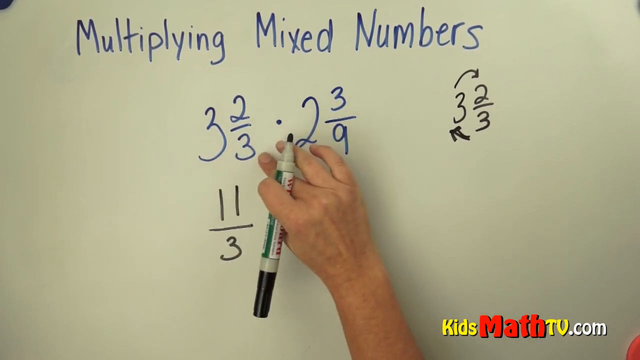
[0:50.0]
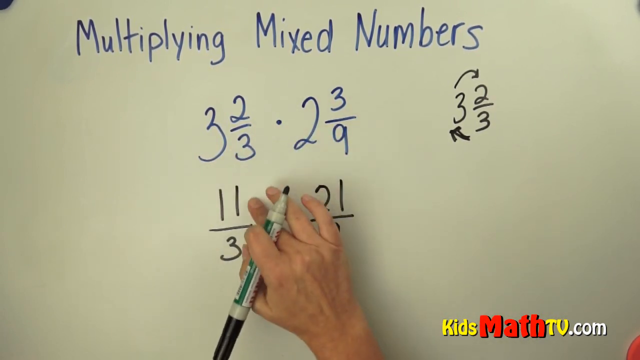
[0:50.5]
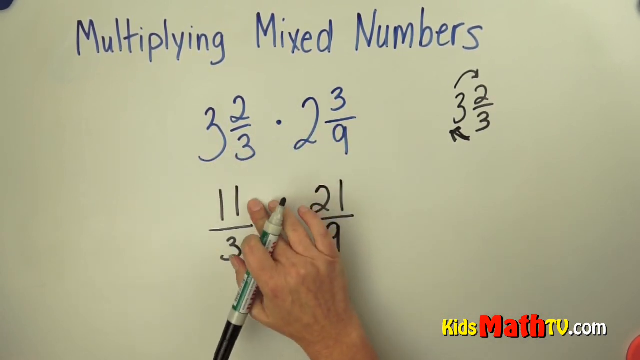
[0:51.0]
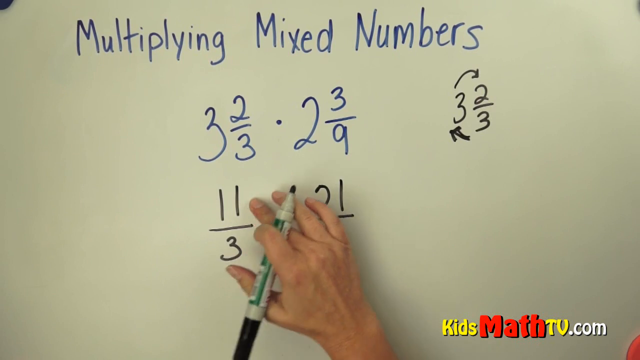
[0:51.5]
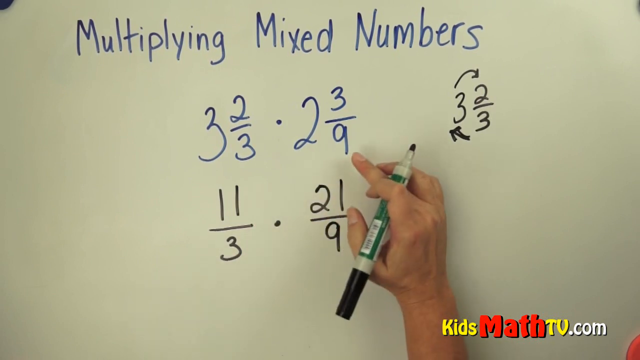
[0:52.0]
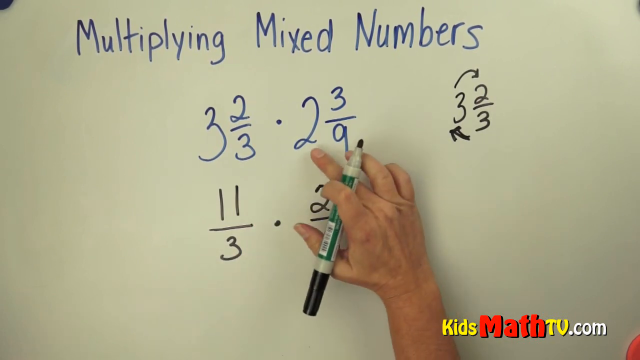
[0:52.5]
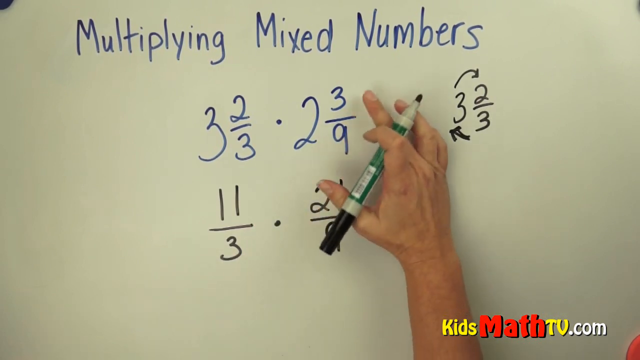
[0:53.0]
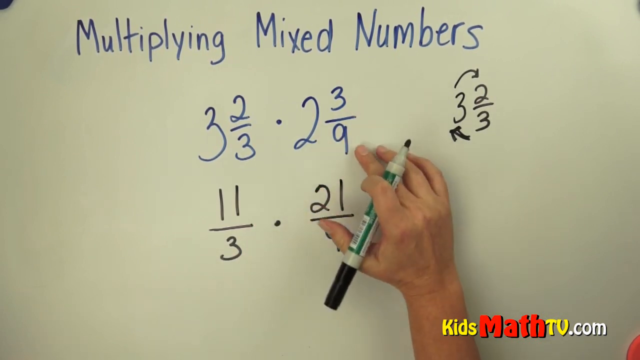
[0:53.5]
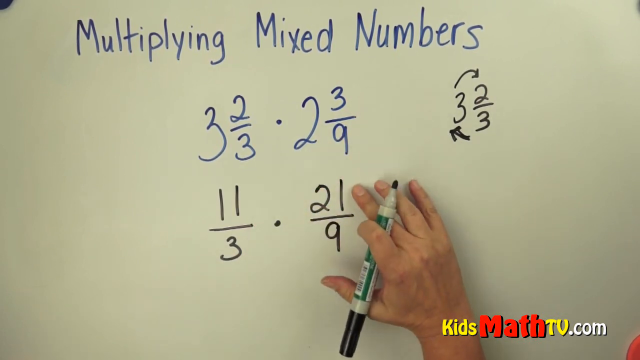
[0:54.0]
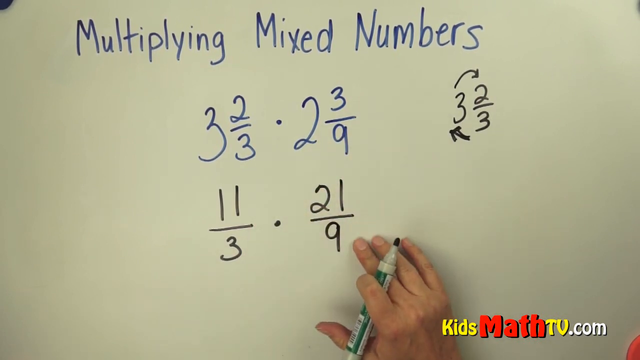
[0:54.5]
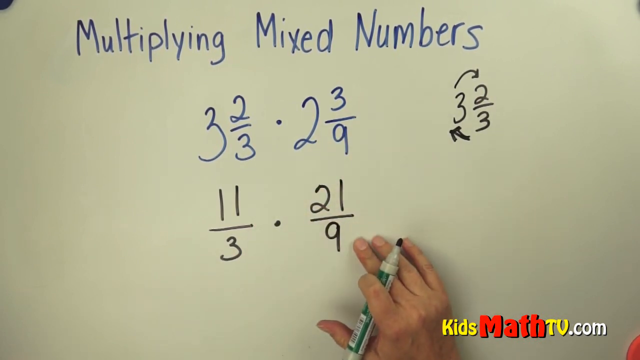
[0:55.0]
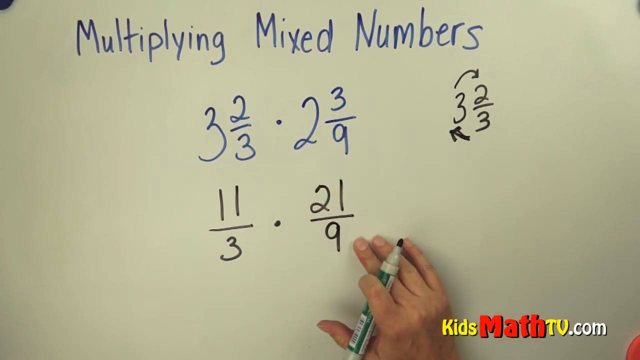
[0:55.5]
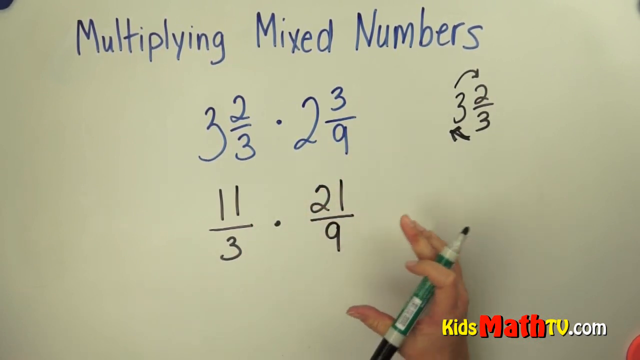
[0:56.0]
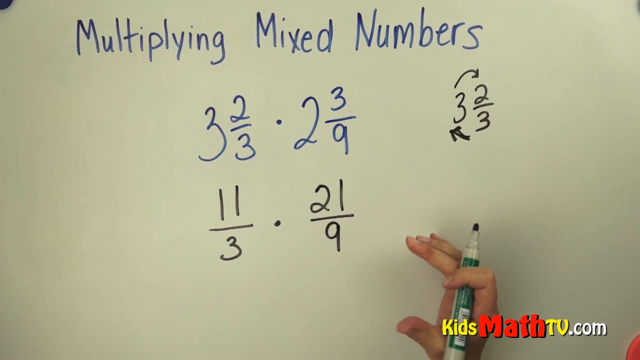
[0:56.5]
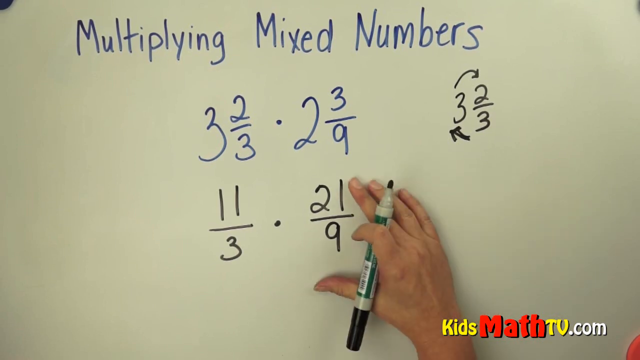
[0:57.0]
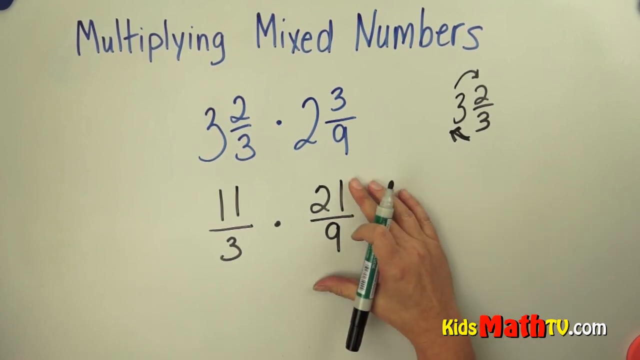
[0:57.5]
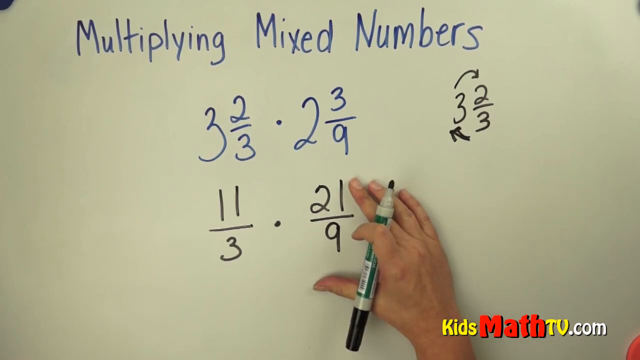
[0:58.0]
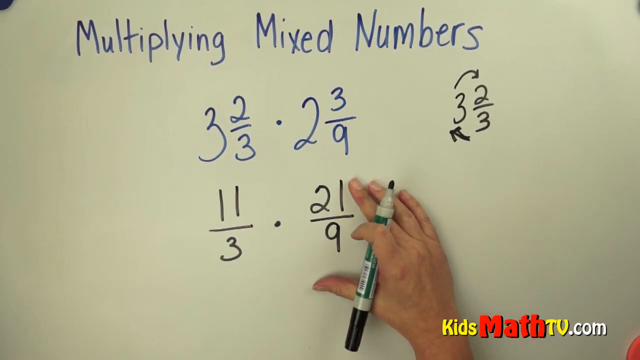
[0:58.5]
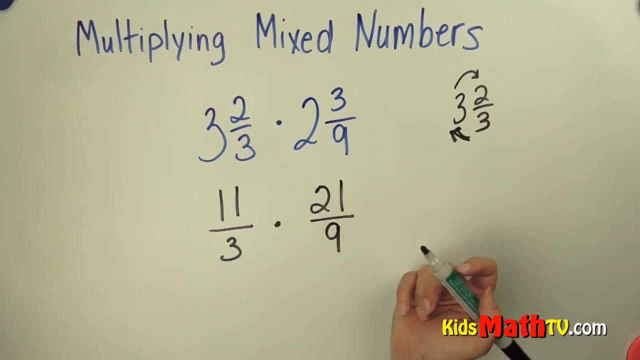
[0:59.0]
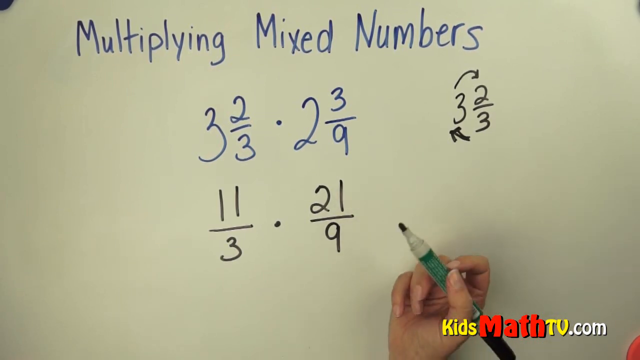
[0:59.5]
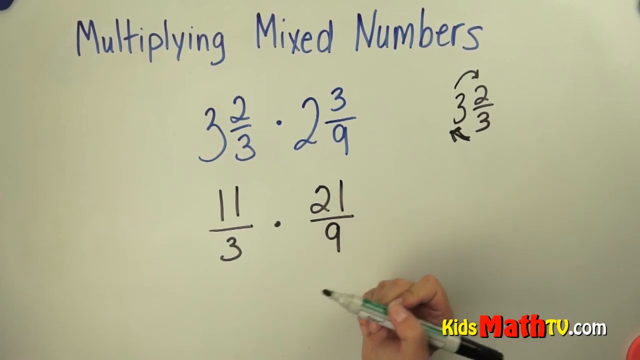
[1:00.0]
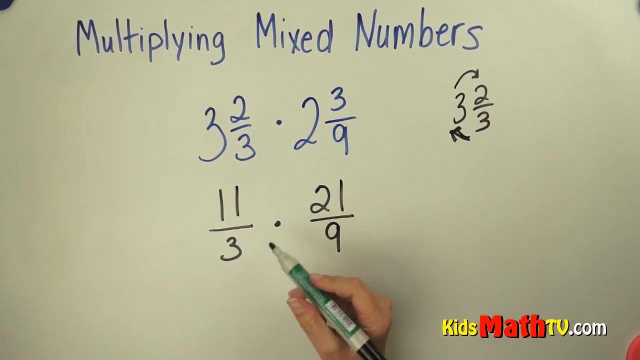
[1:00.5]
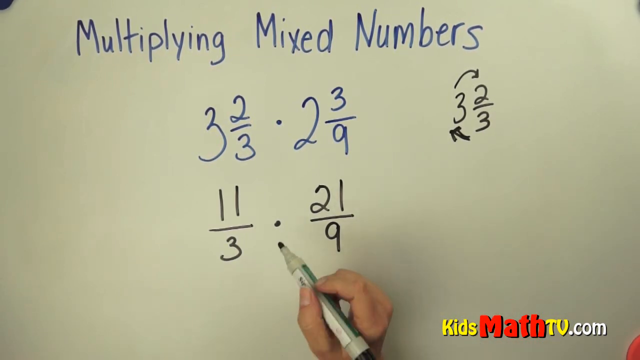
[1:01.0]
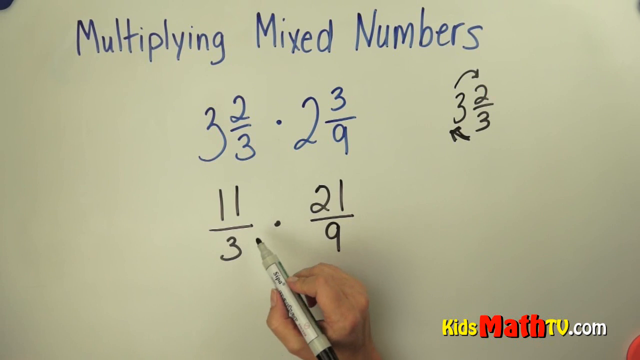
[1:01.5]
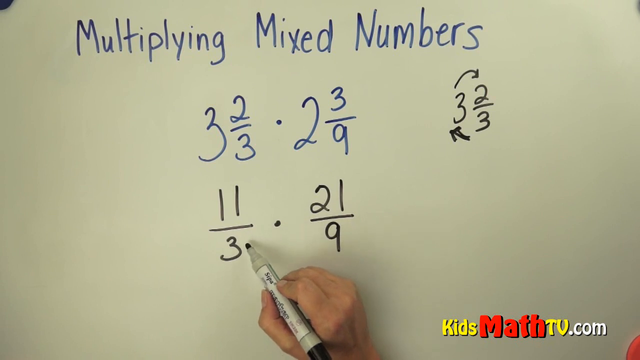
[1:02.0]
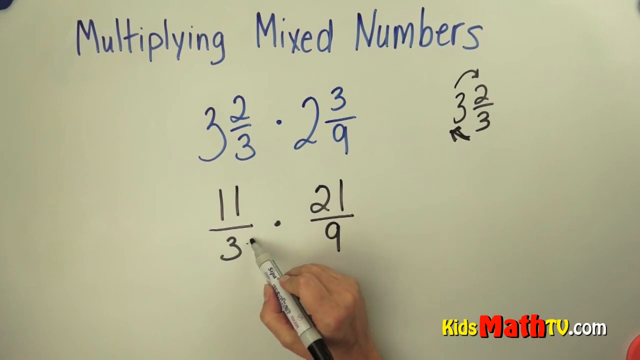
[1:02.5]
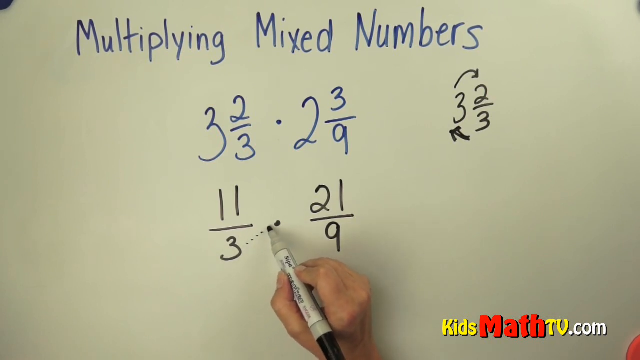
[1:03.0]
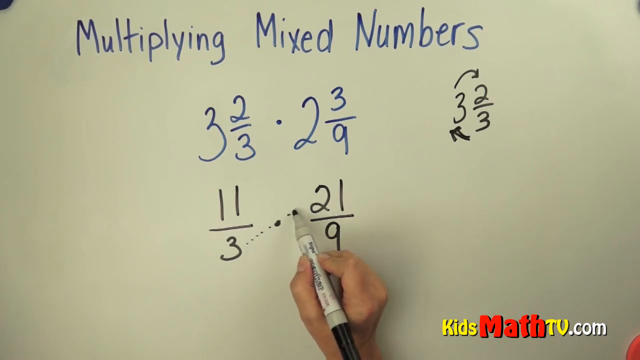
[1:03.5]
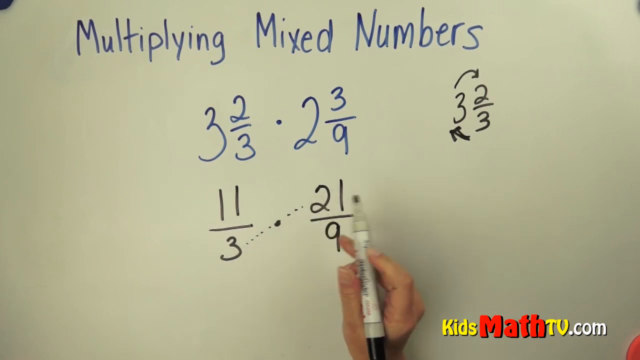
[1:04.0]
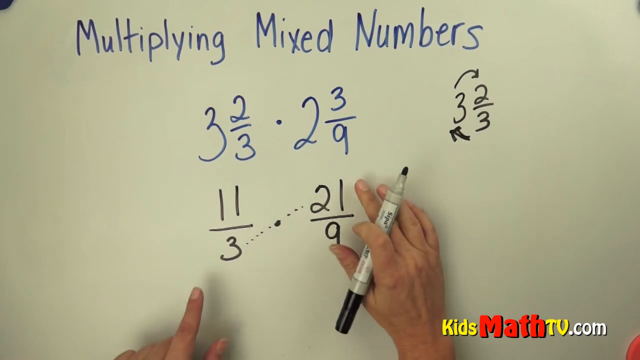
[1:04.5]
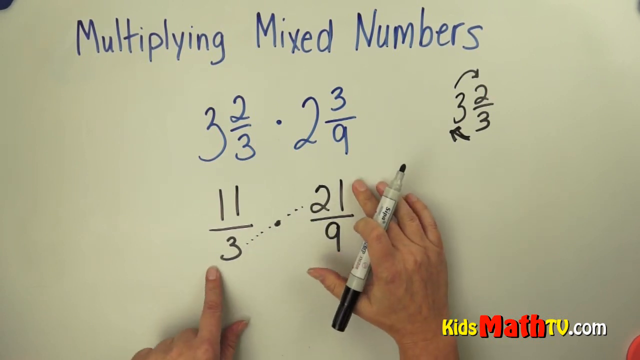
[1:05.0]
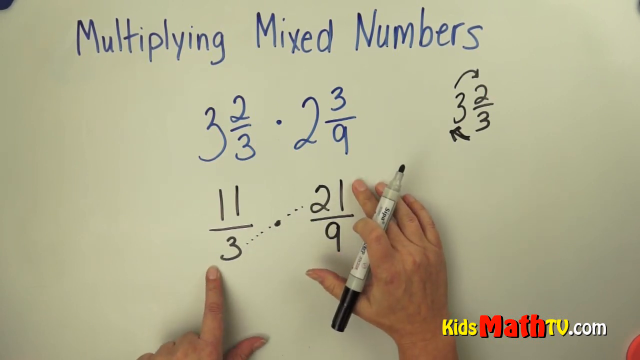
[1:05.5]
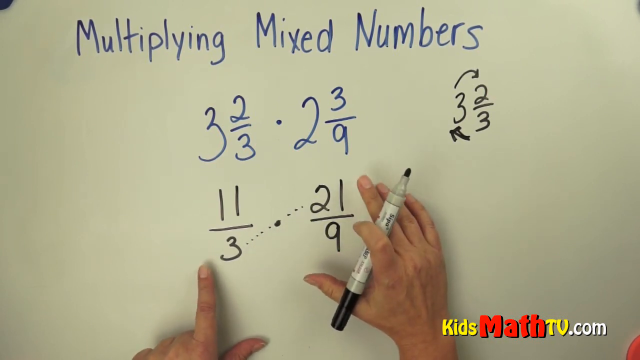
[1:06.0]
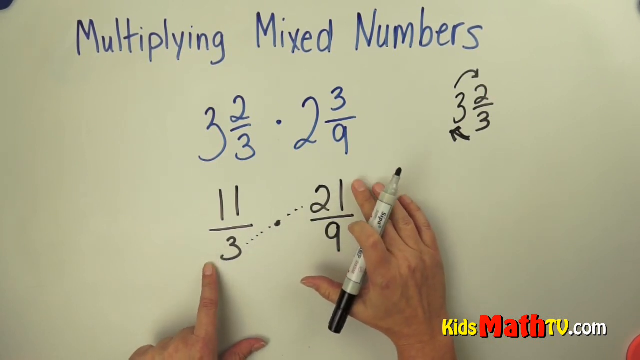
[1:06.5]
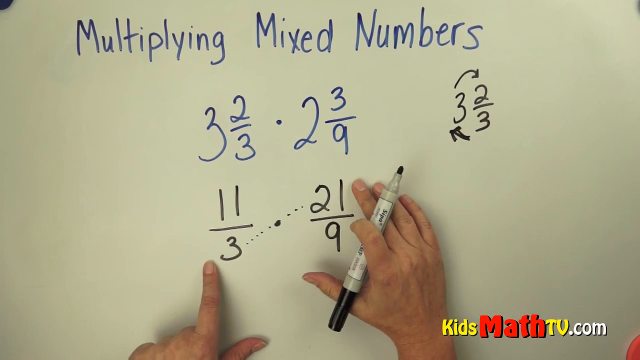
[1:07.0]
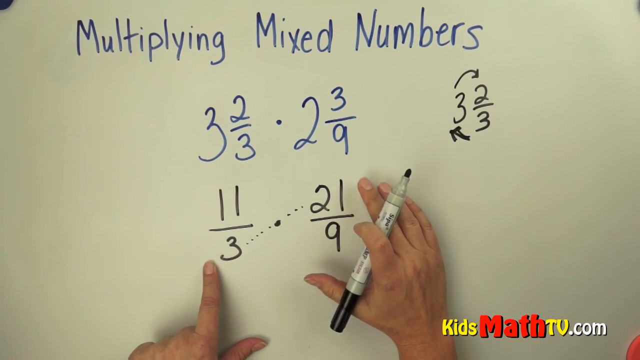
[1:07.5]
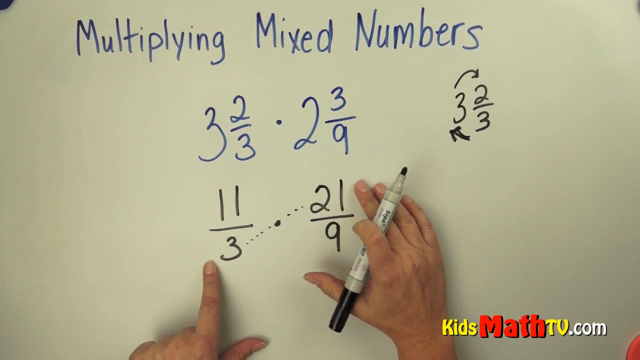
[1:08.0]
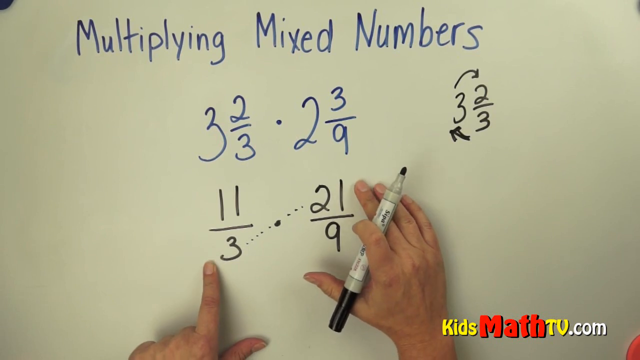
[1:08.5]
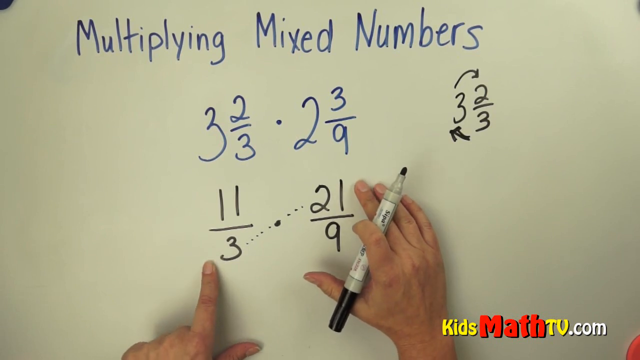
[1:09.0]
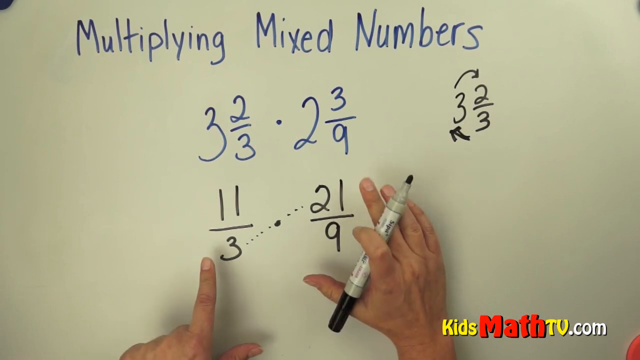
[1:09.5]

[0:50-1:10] The whiteboard shows the heading "multiplying mixed numbers" in blue, with three and two-thirds and two and three-ninths in blue beneath it. Below those, written in black, are eleven over three and twenty-one over nine. A white hand holds a marker pen between the index finger and thumb and moves from one number to another, indicating an explanation of the conversion. The hand draws a dotted line between the denominator of the first black number and the numerator of the second black number. The index finger of the left hand then points to the first black number.